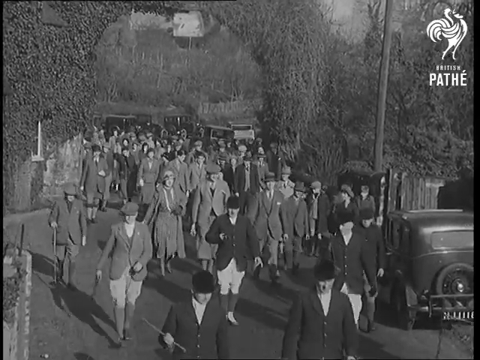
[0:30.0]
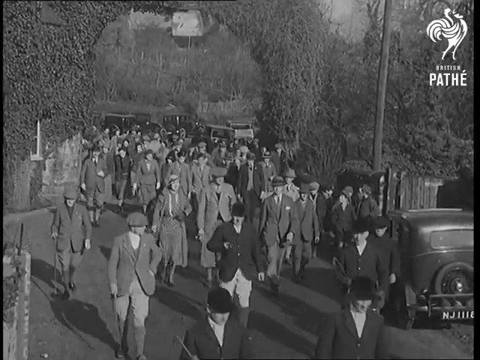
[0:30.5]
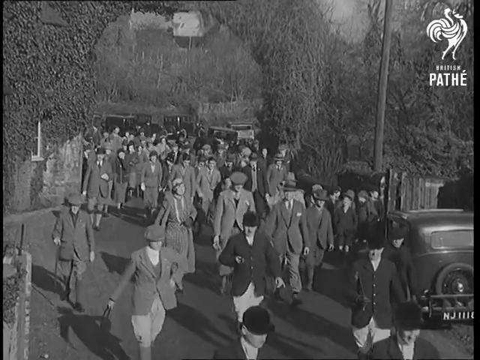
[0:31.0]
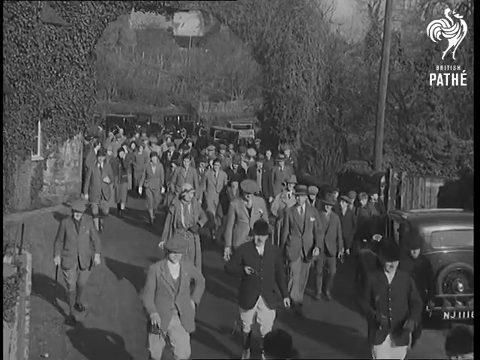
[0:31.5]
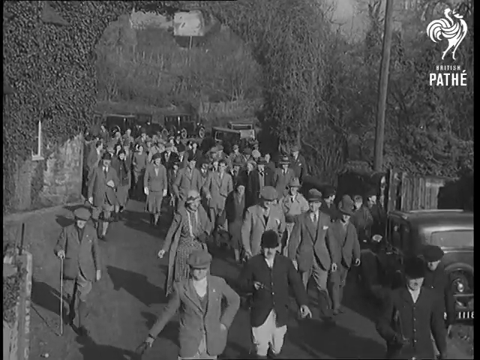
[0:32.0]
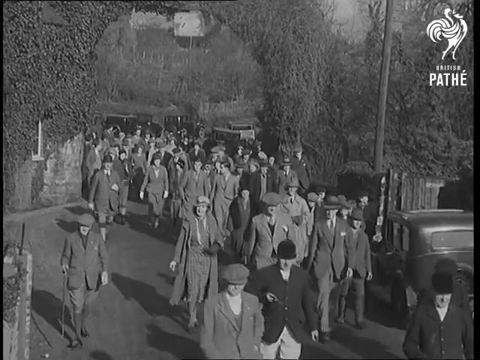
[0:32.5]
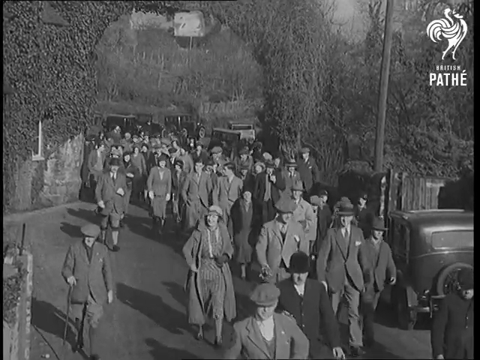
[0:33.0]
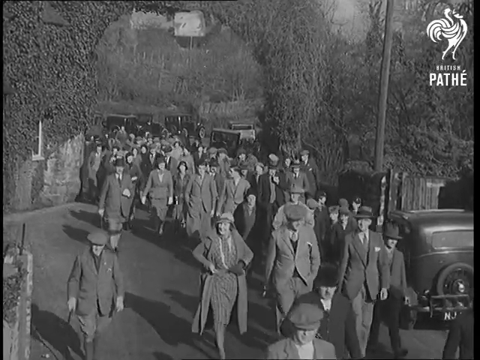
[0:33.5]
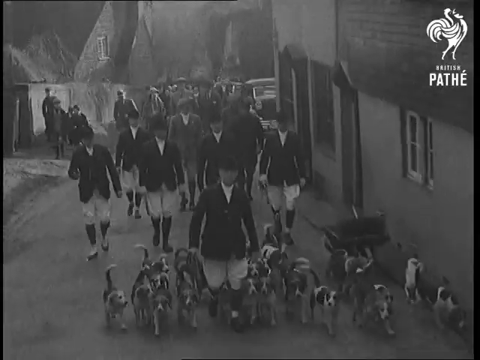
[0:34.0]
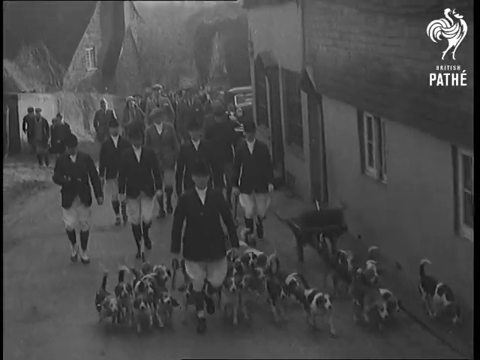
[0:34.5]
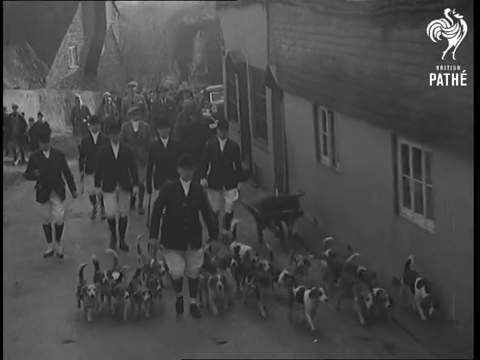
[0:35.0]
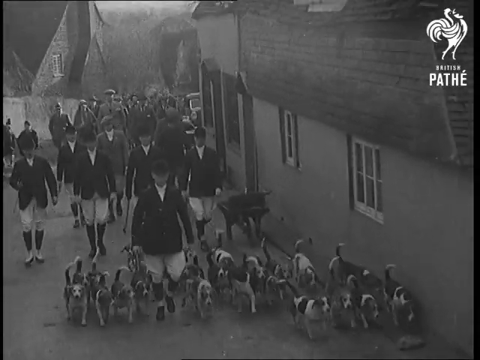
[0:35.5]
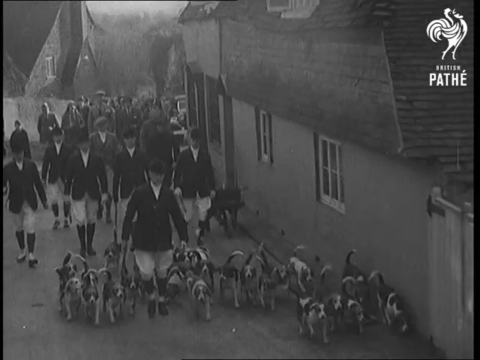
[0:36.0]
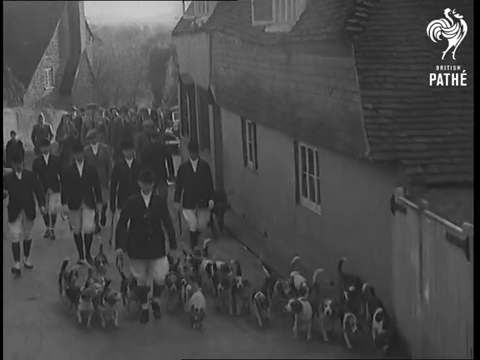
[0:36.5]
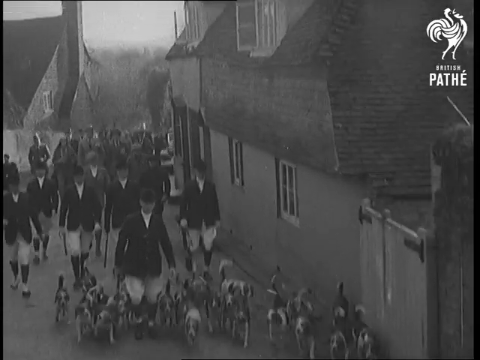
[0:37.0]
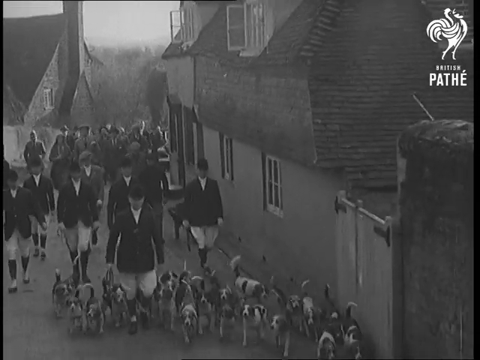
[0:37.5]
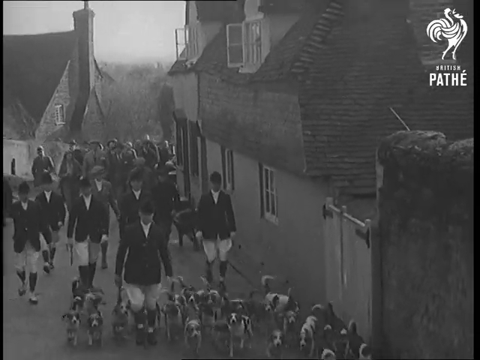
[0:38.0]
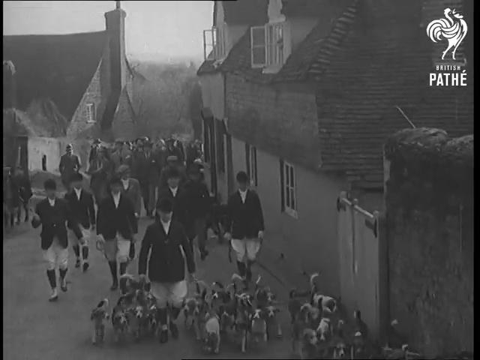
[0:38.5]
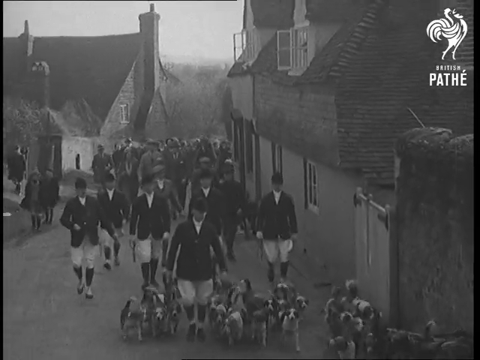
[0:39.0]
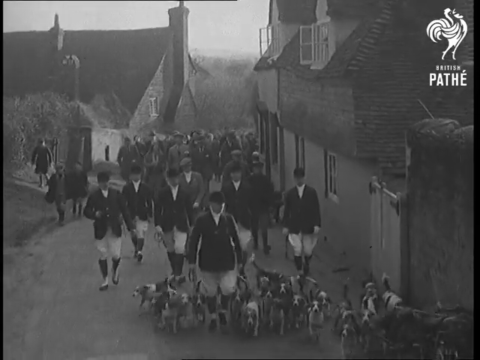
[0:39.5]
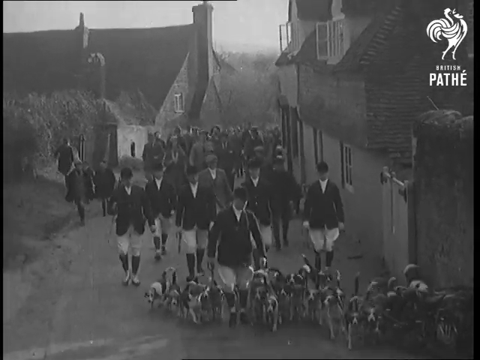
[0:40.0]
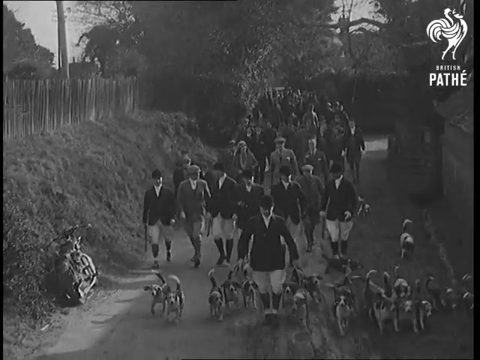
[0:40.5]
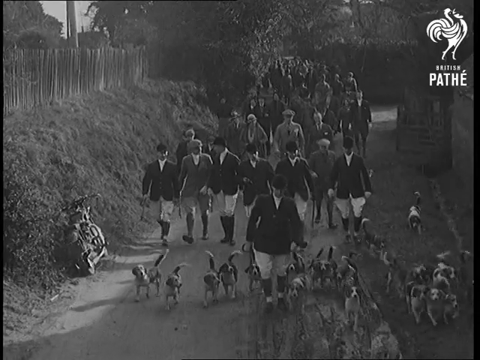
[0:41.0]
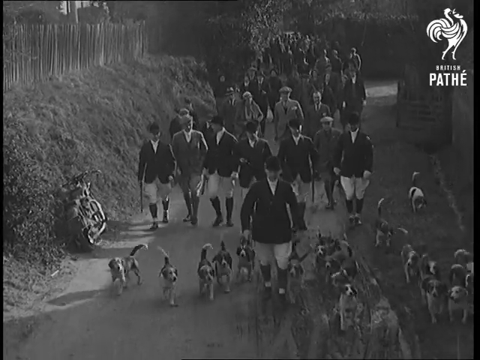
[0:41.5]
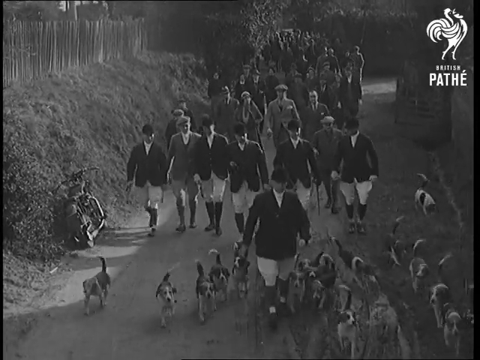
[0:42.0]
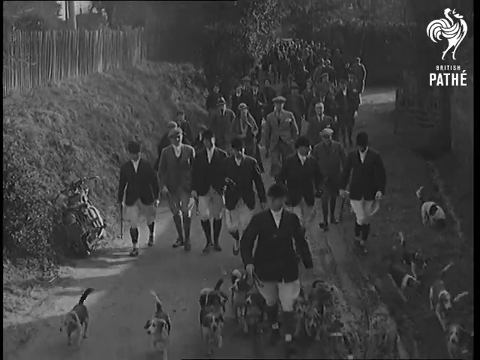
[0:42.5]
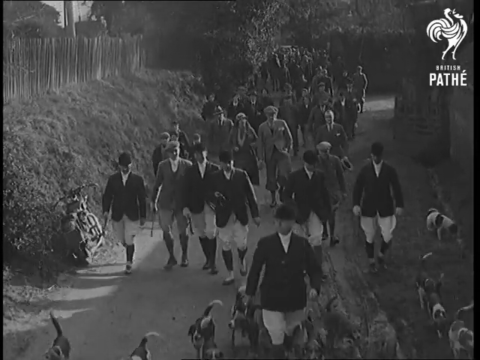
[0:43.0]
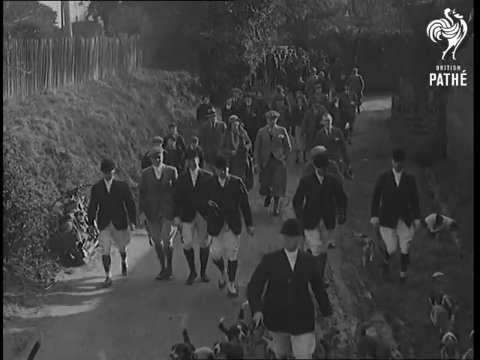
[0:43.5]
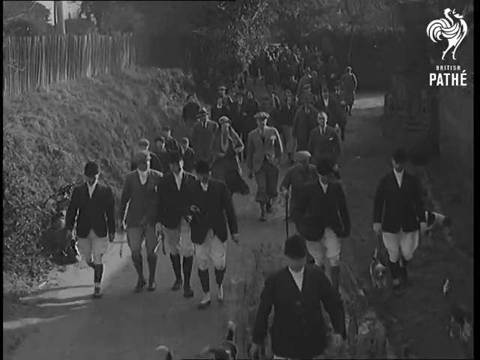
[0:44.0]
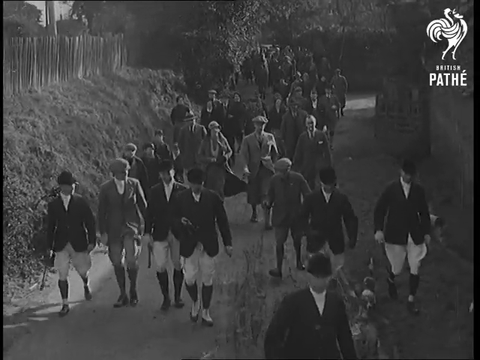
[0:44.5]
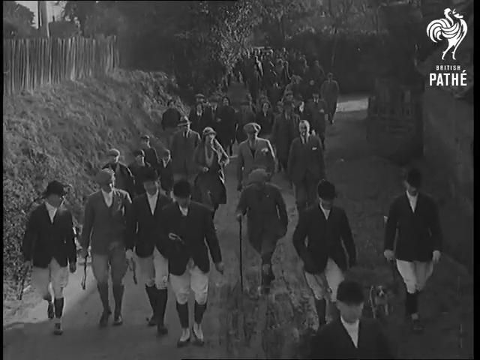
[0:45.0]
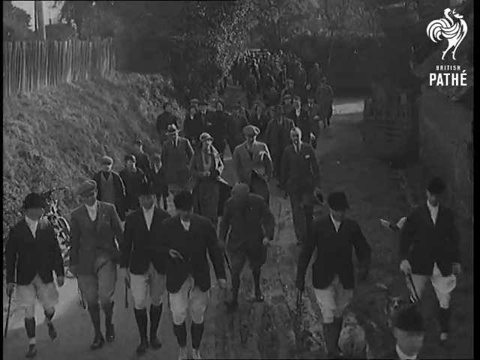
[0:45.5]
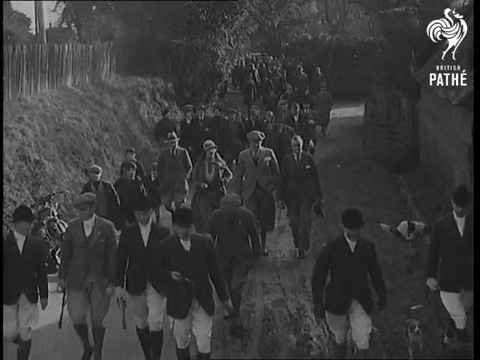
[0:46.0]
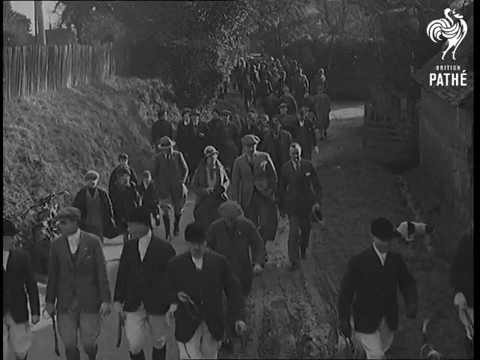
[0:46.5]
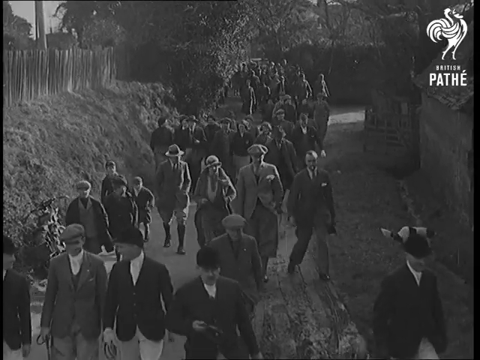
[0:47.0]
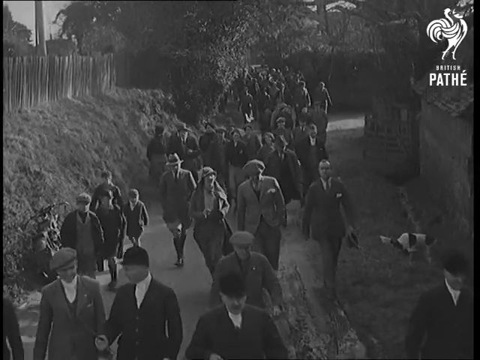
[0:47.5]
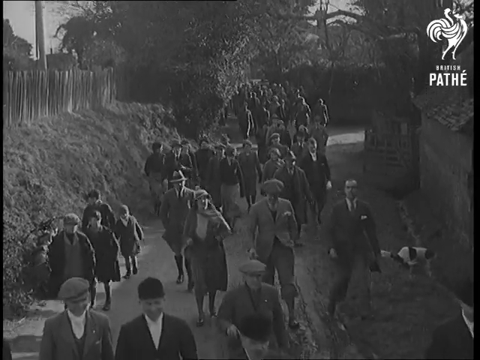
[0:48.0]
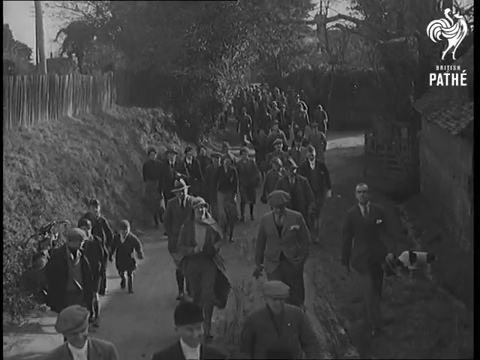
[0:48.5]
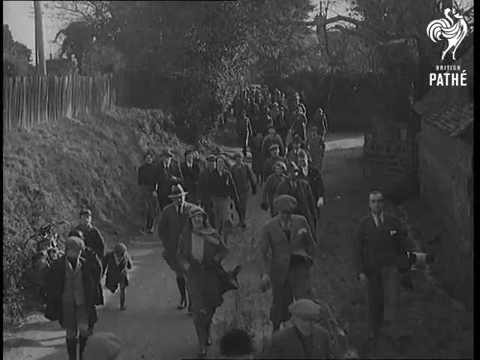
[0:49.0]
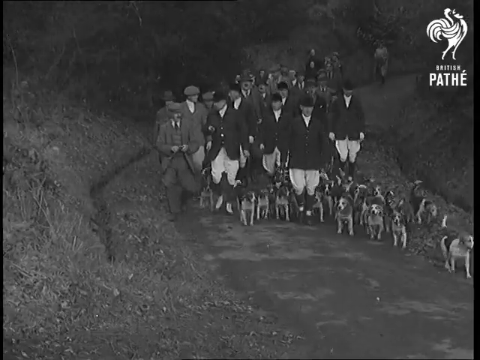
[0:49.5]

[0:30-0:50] In black and white, a very large arch in the background looks like it is made of greenery, shrub and bush. Over a hundred people walk below the arch toward the bottom right. Most of them look like they are wearing suits or top hats, so it looks like a very high-class occasion. The video then cuts to another scene with around six men in black coats and black hats; they all look like they are matching, wearing white baggy pants and black boots. They walk toward the camera down a driveway, a narrow passageway with houses on either side. The man in black leading them has around 20 to 30 beagles surrounding him, all wagging their tails and walking along with him. In the background, around 50 other people walk along. Another scene looks down toward the group, with six people in black coats in front and the beagles at the front, walking toward the camera. There looks like a fence on the left side and there are houses on the right side. They walk down the street toward the bottom right. The people behind walk casually; some have canes, and there are some kids.